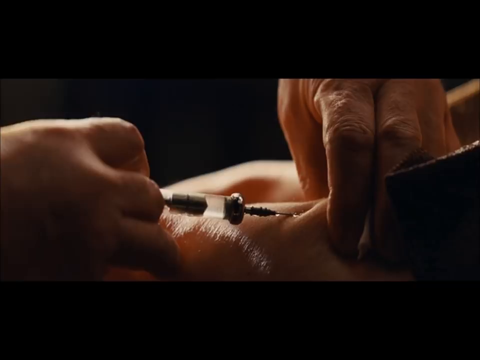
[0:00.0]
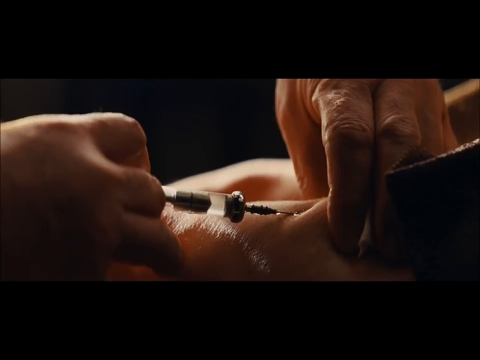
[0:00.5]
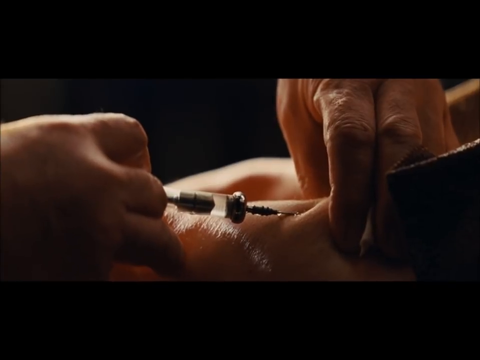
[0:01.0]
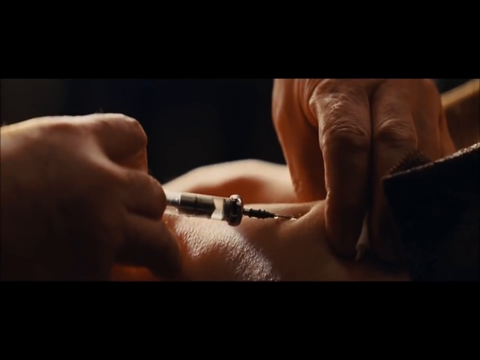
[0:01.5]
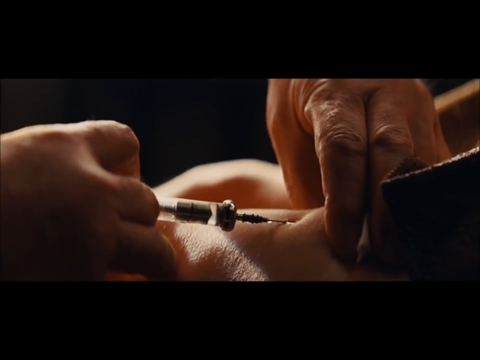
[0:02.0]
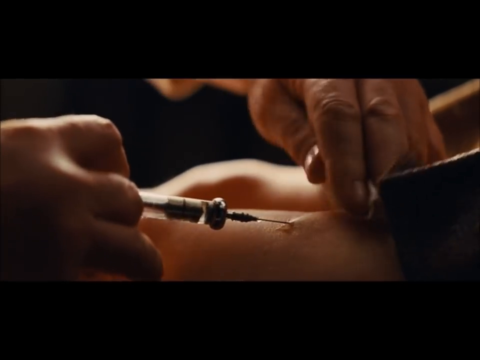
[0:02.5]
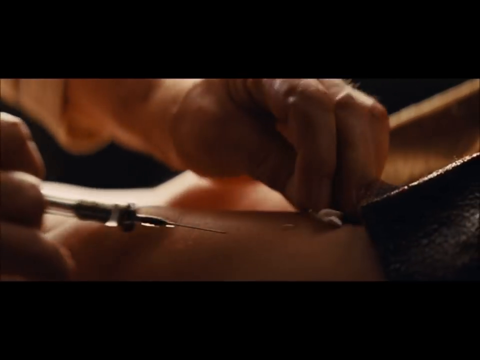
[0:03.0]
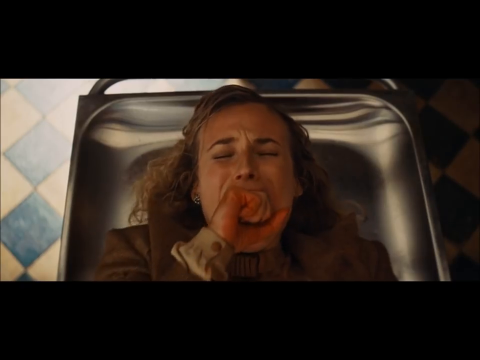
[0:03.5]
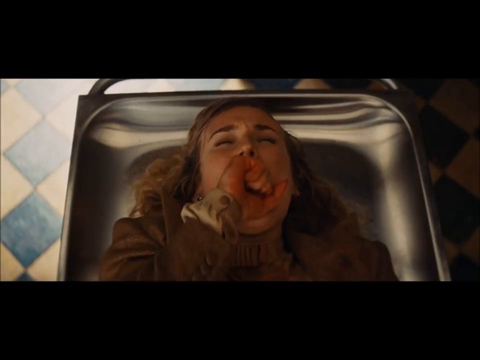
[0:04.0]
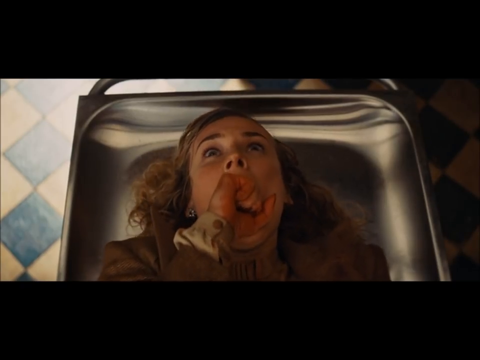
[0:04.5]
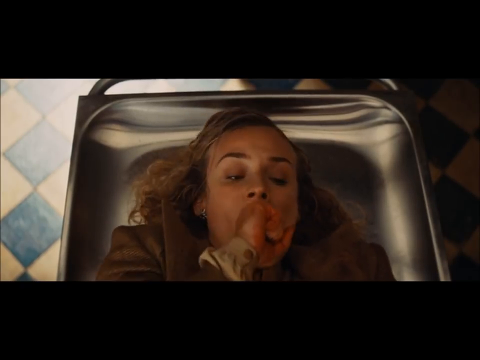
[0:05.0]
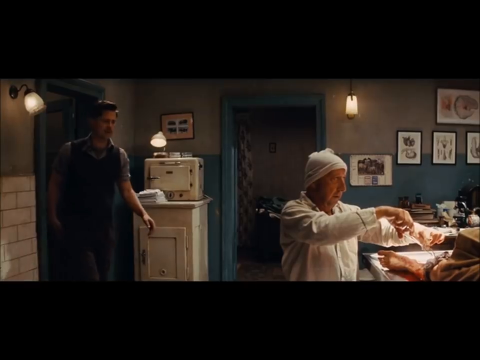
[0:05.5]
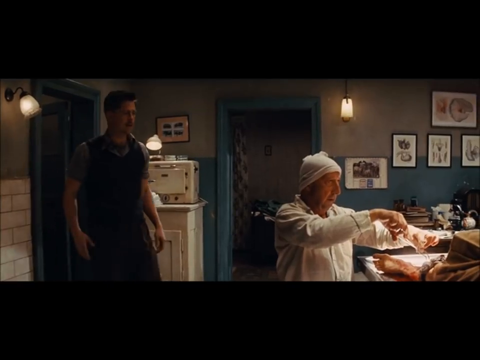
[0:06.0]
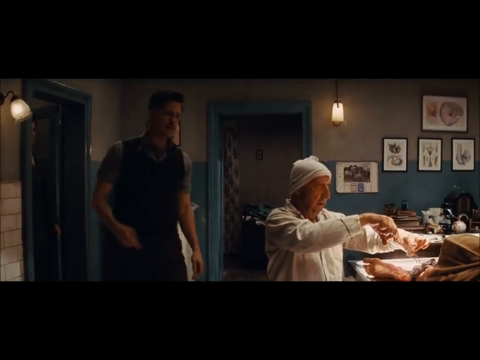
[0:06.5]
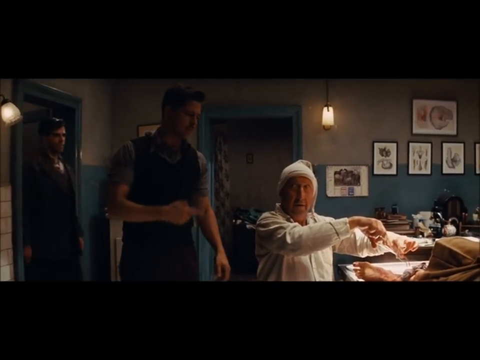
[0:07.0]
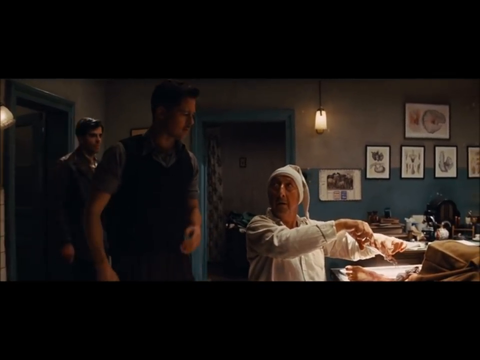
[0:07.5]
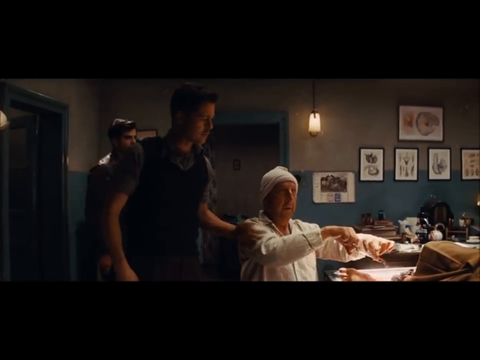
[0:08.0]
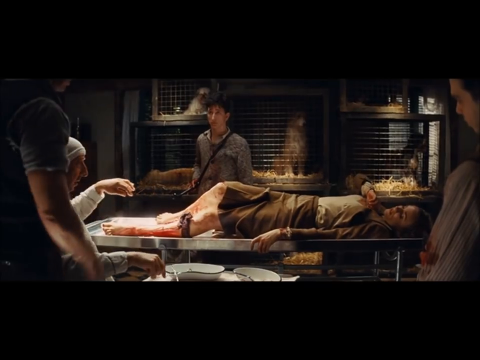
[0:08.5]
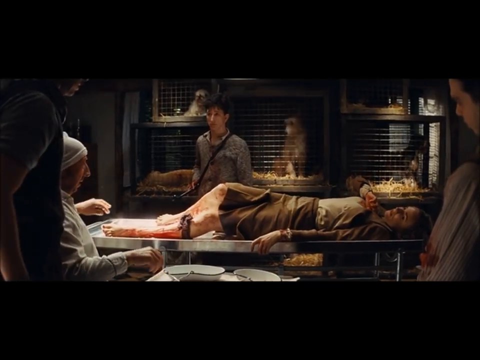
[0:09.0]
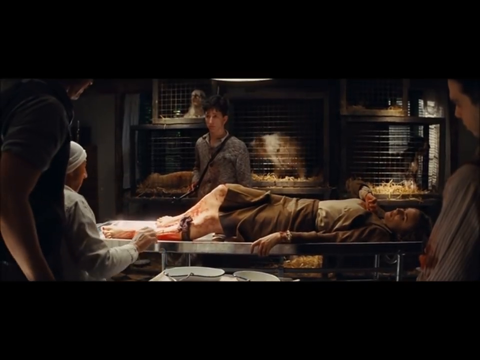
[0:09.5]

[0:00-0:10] In a close-up, a hand pinches some skin and a syringe injects serum into it. The view zooms out to reveal a patient, a middle-aged lady in a brown coat on a metal bed, coughing, her eyes open and looking down. The scene cuts to a room where an old man is working on a patient, and two young men enter from the left side of the room. The scene shifts again to the whole picture of the lady lying on the metal bed while the other man seems to be discussing what is going on.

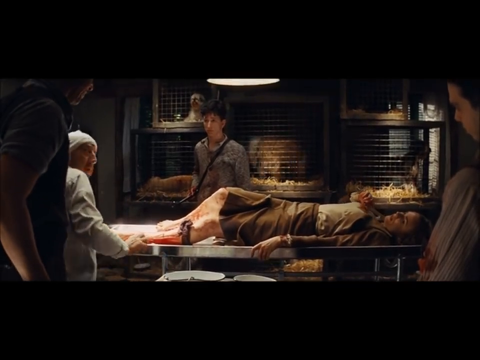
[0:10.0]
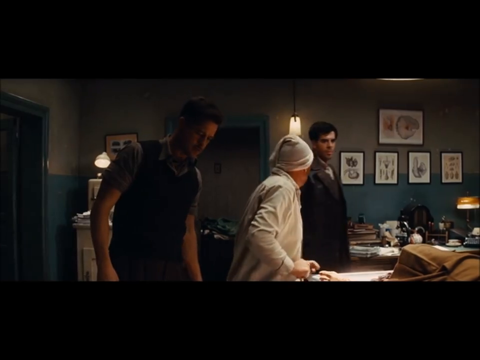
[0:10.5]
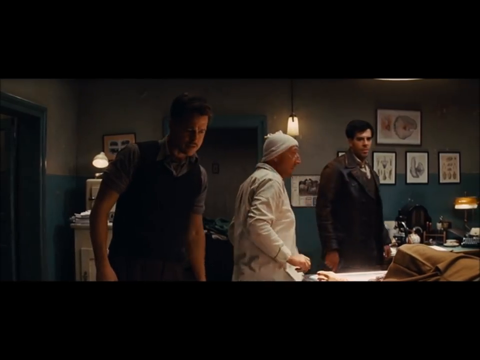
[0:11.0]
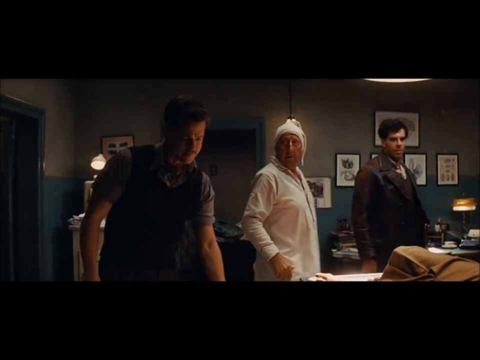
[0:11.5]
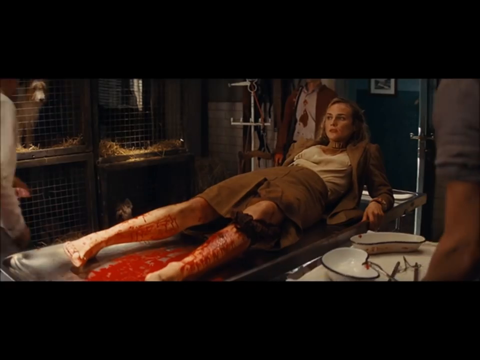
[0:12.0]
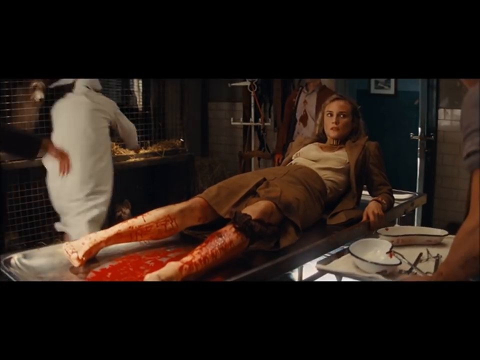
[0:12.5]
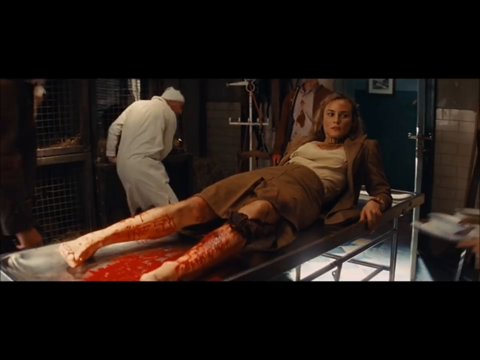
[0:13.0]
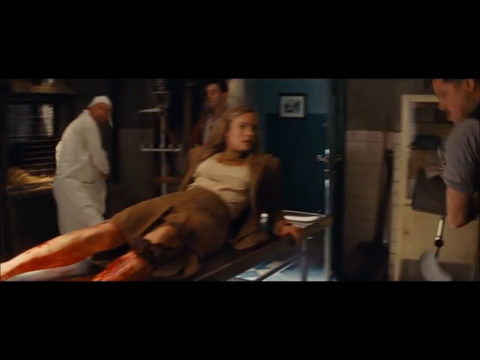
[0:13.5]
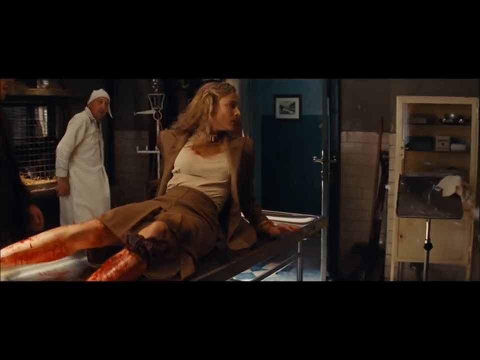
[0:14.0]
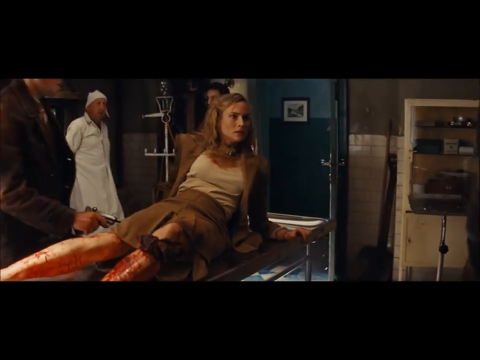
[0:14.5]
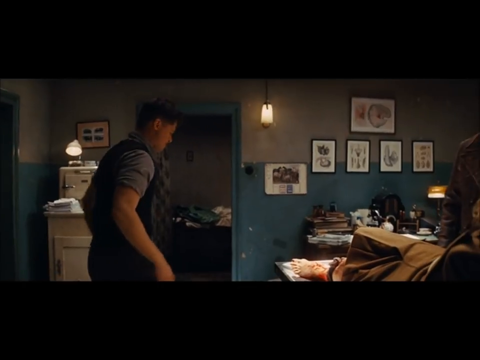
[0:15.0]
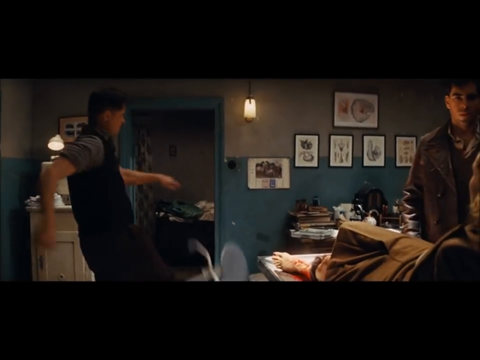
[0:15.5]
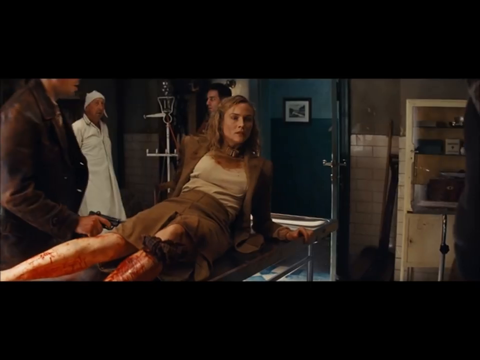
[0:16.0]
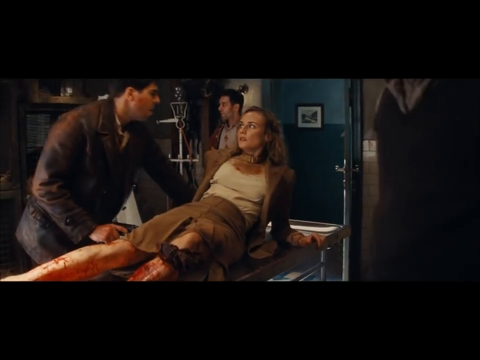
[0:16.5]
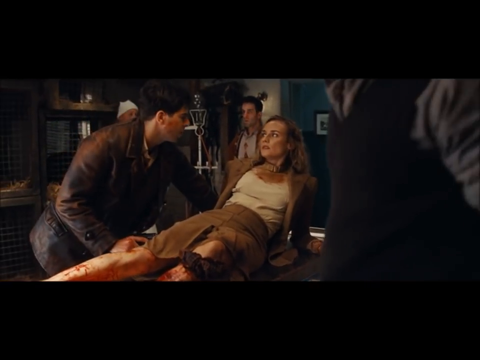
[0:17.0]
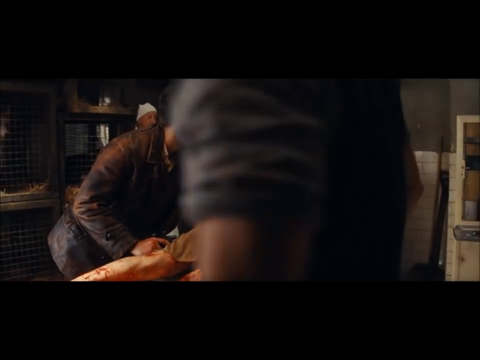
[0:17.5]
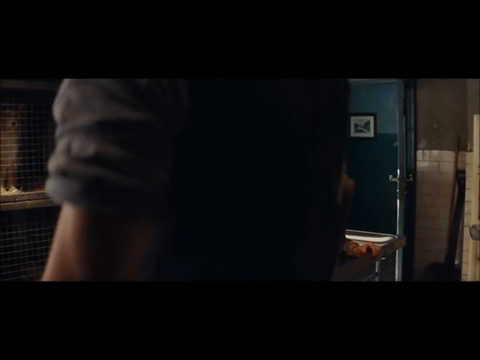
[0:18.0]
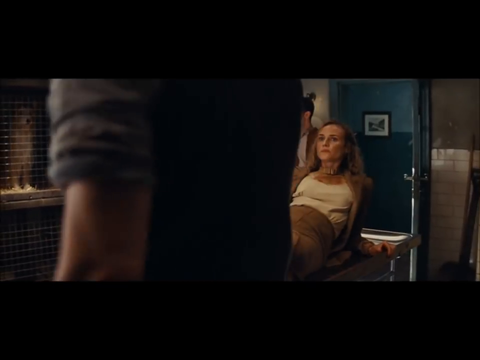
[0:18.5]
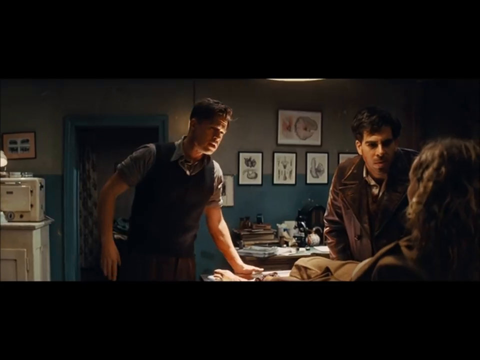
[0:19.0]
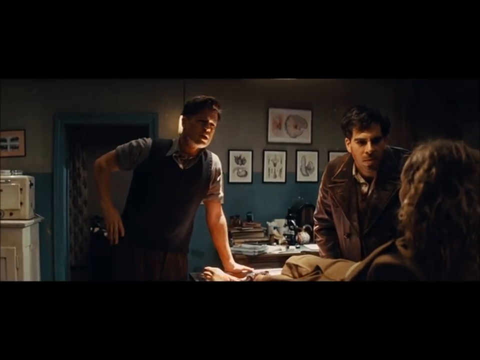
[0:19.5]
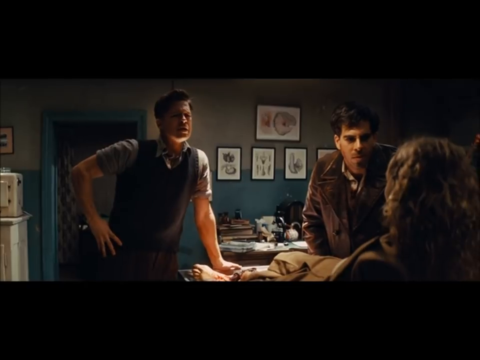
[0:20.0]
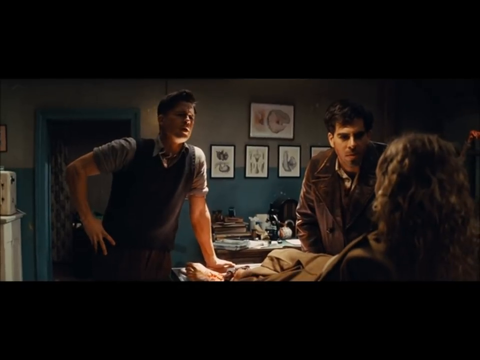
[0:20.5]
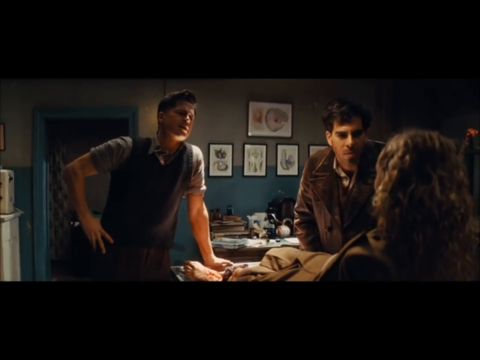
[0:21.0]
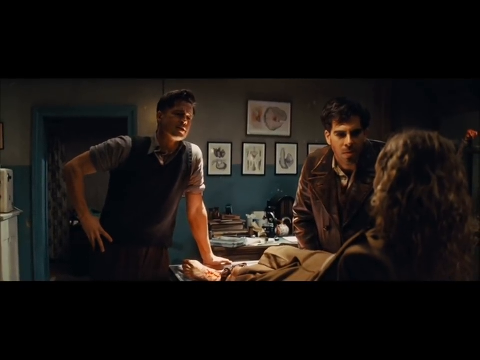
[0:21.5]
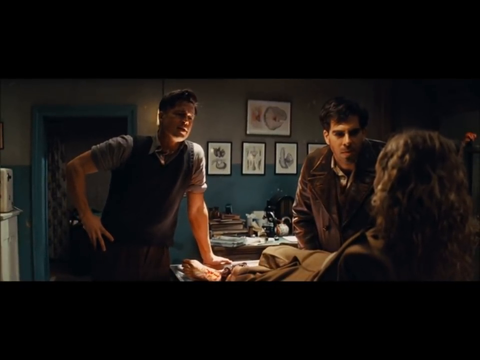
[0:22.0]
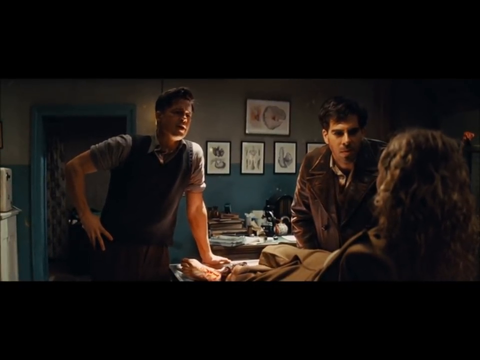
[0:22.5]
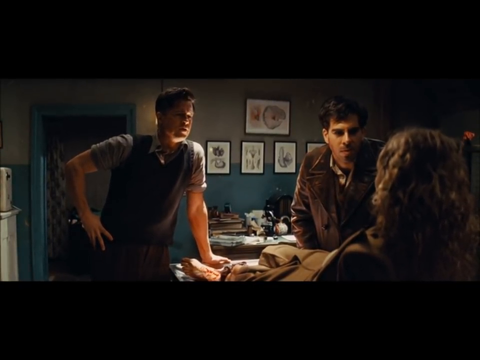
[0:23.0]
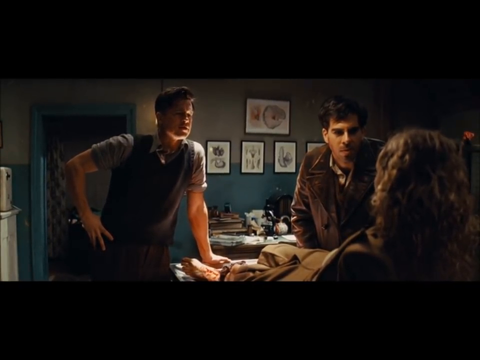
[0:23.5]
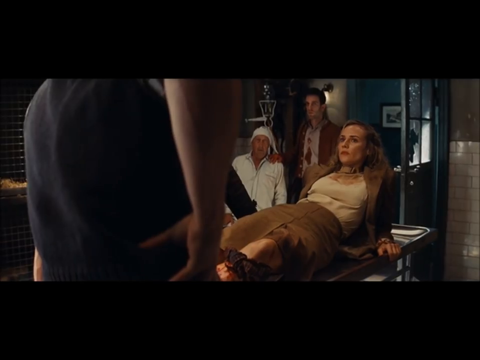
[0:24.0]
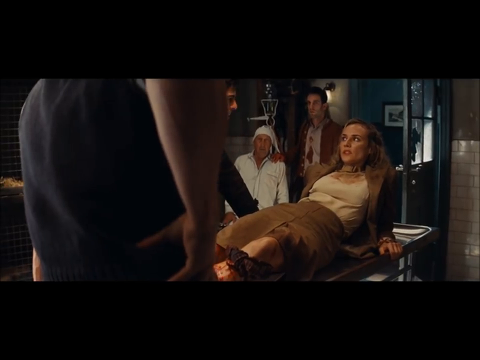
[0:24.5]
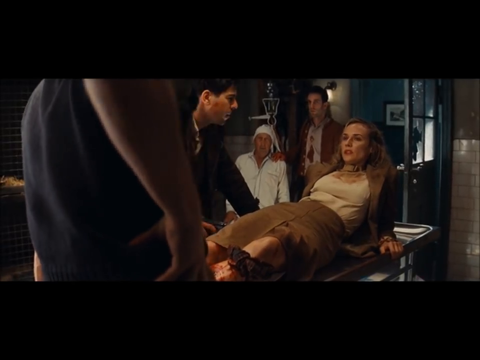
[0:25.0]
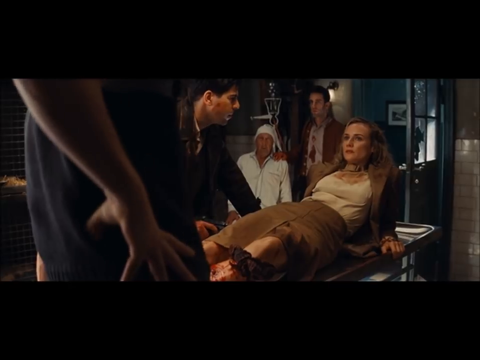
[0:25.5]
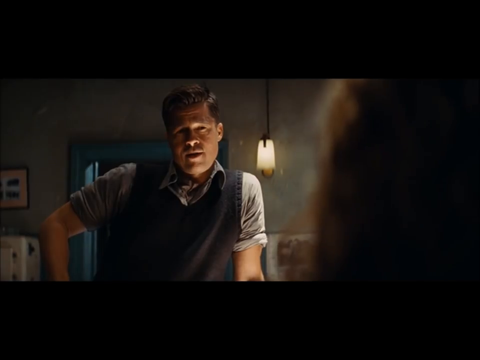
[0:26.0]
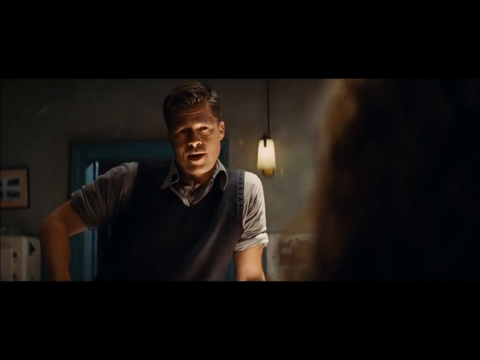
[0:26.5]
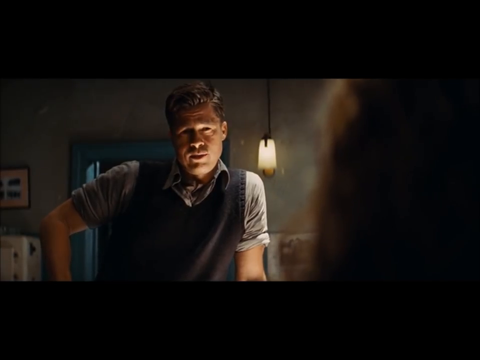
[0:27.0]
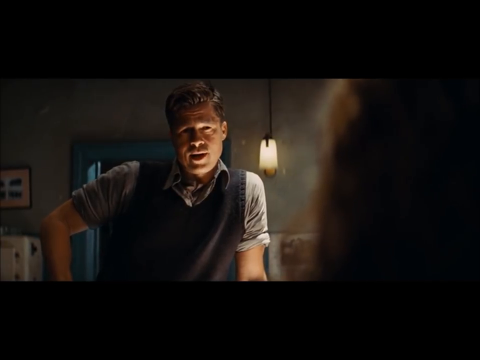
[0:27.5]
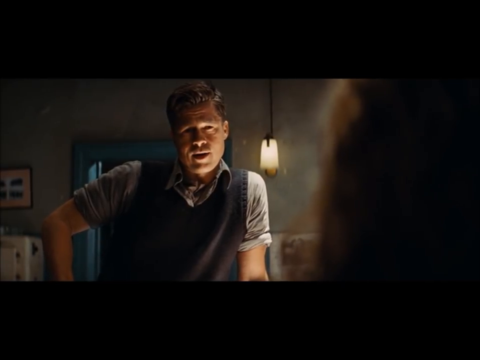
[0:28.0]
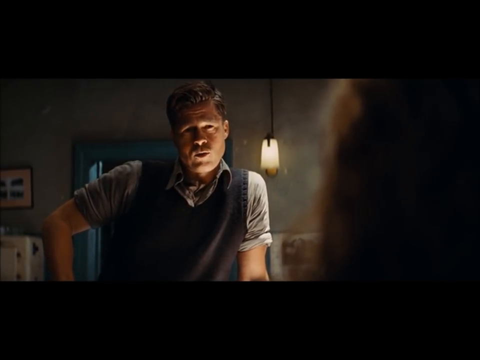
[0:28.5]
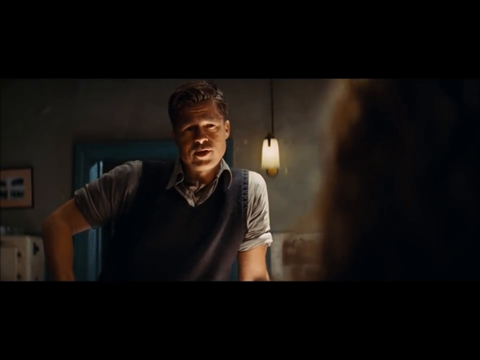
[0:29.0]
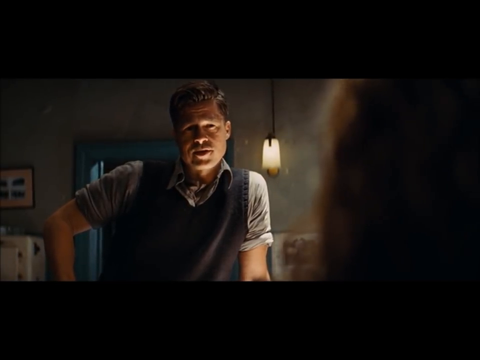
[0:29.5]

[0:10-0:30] A dimly lit room has walls divided horizontally, the upper half painted gray and the lower half painted blue, with several framed paintings hanging on them. In the center are three people: one man dressed in white and two in regular clothing. The scene cuts to a metal-framed bed in the same room, where a woman lies with her legs covered in blood. She begins to raise herself slightly, revealing a brown outfit of a blouse or suit jacket and a skirt or dress. One of the casually dressed men, not the one in white, stands beside her with one hand braced on his waist and the other on the metal bed frame, his posture tense. Leaning forward, he kicks something other than the bed out of the way, and he speaks to the woman in what appears to be an interrogating manner.